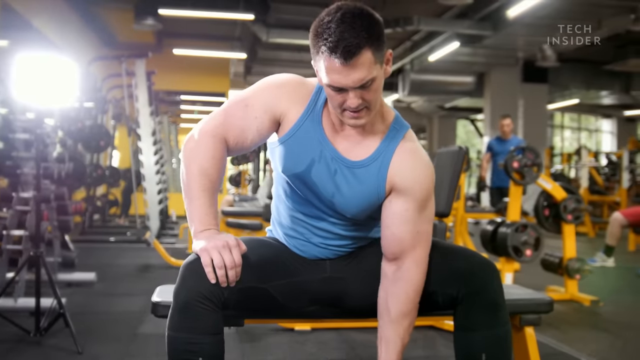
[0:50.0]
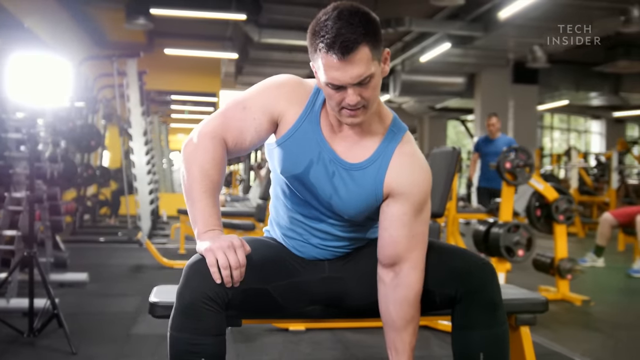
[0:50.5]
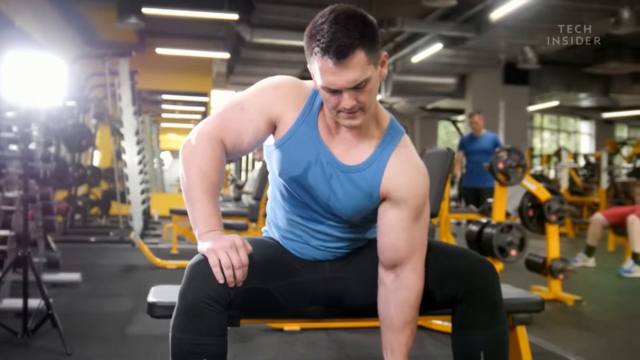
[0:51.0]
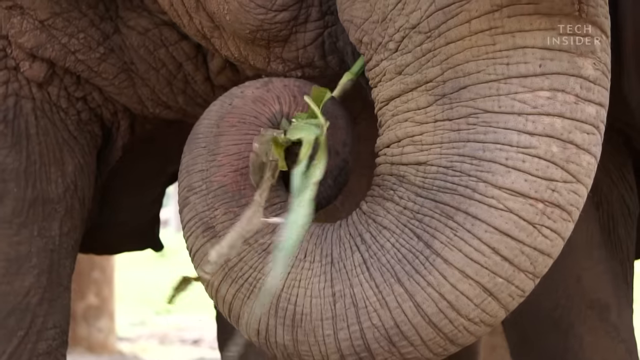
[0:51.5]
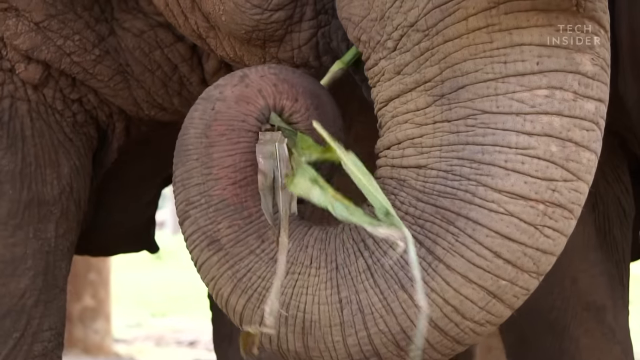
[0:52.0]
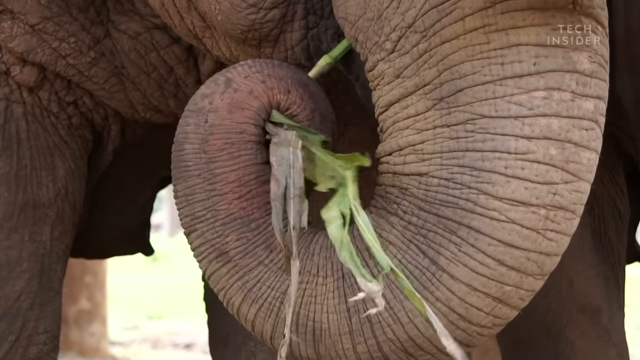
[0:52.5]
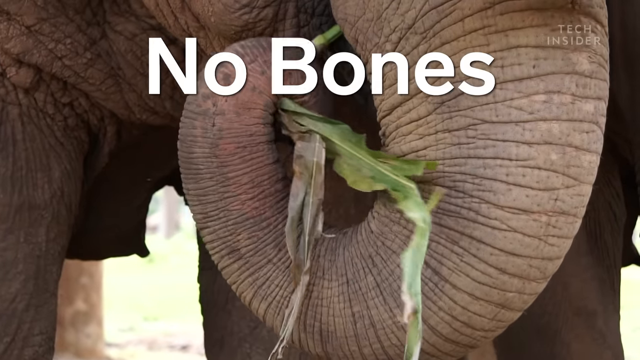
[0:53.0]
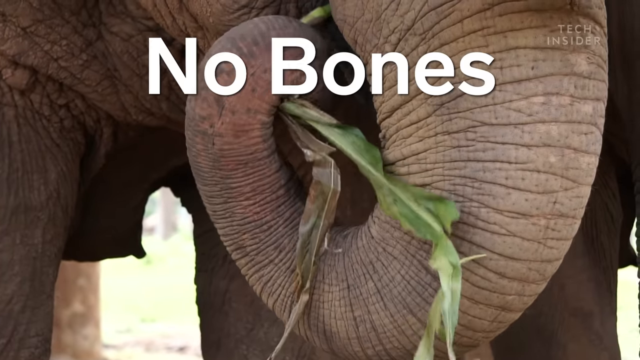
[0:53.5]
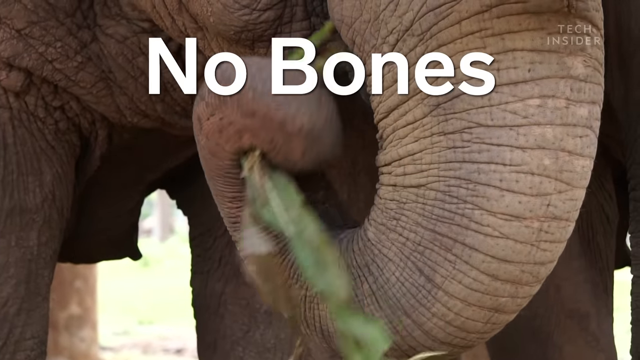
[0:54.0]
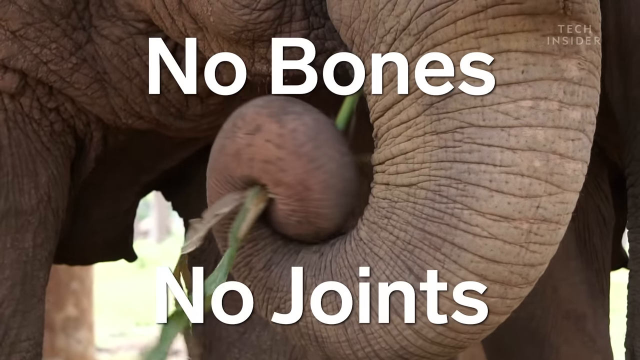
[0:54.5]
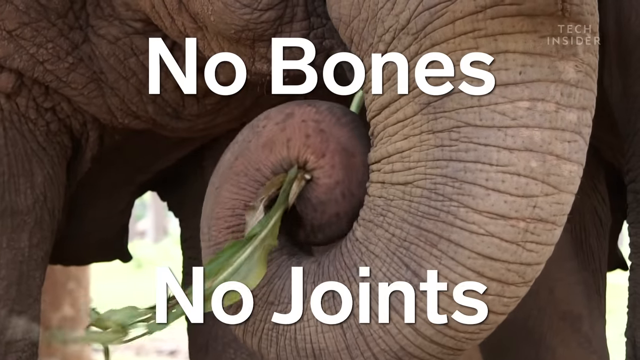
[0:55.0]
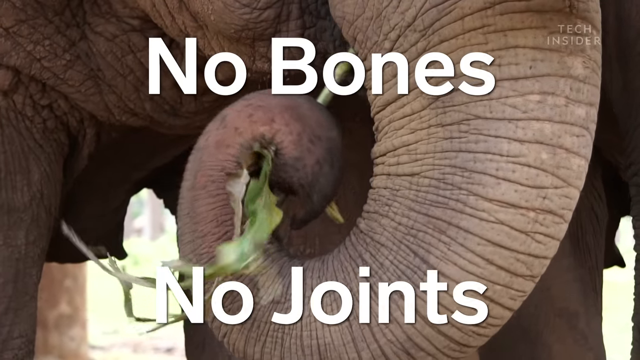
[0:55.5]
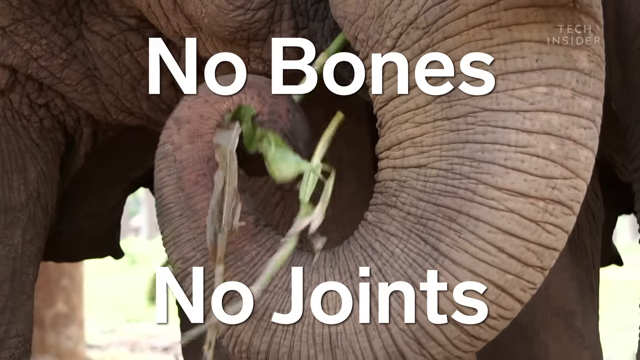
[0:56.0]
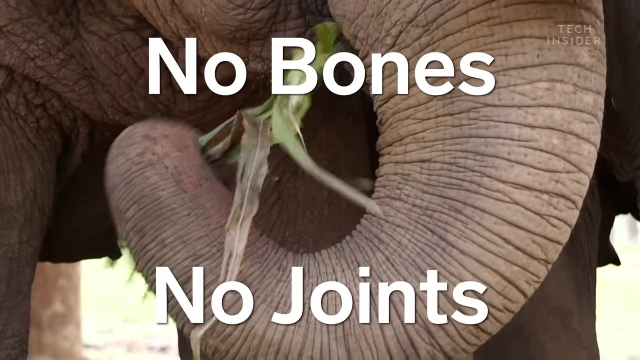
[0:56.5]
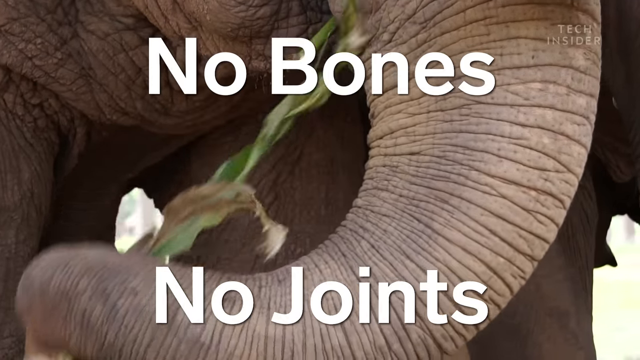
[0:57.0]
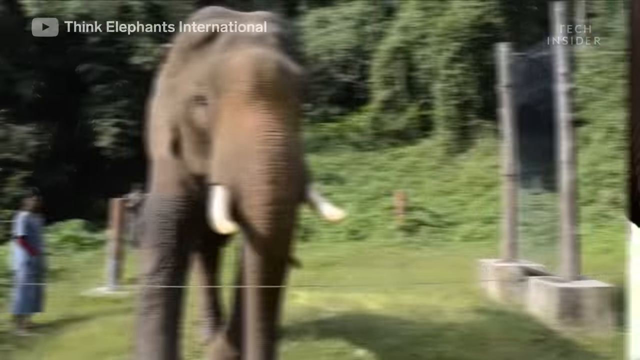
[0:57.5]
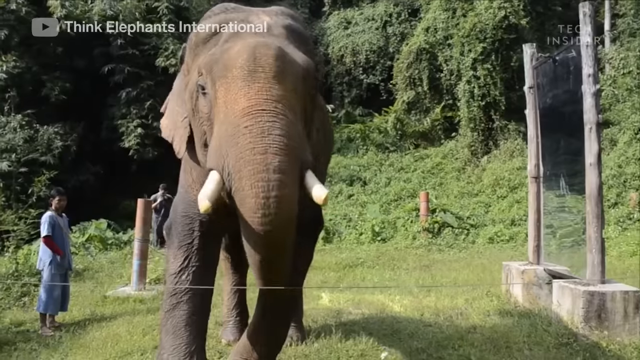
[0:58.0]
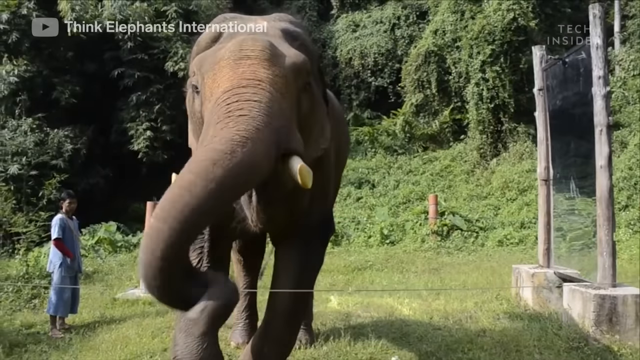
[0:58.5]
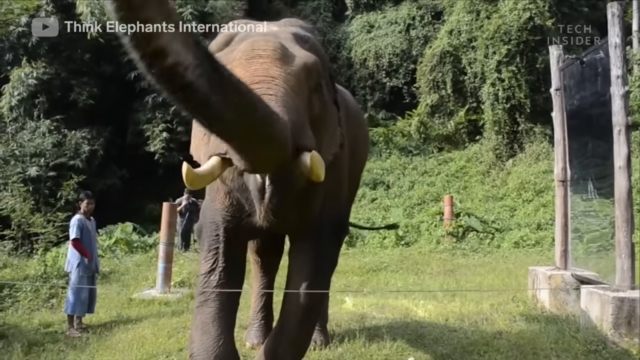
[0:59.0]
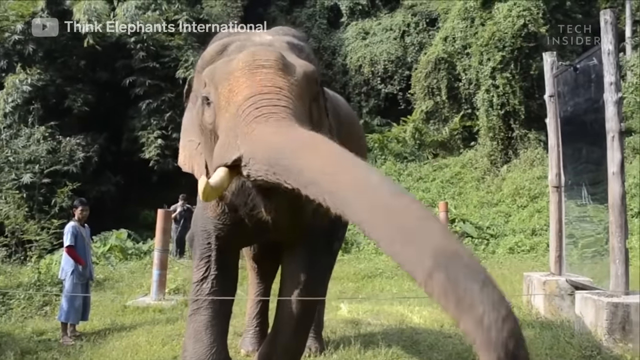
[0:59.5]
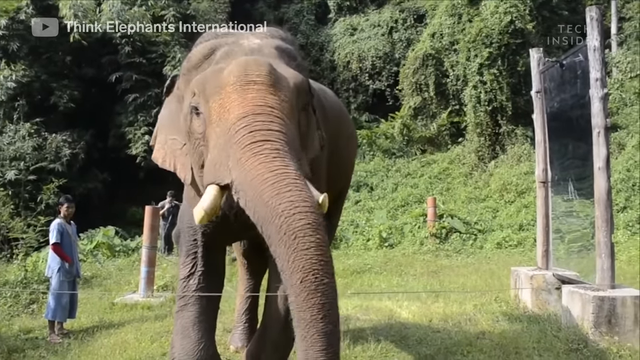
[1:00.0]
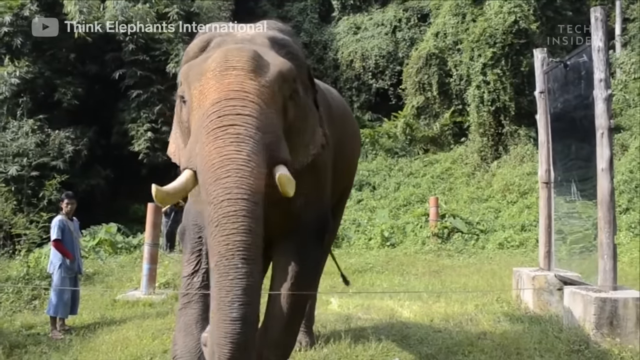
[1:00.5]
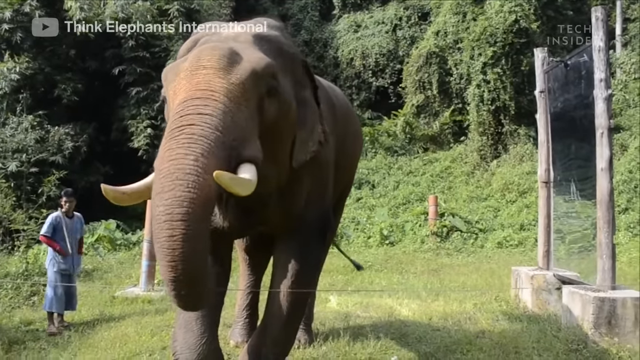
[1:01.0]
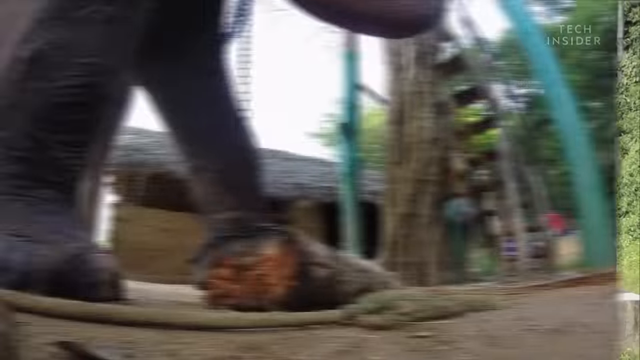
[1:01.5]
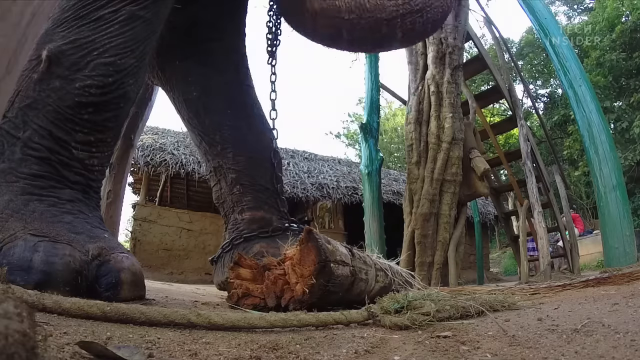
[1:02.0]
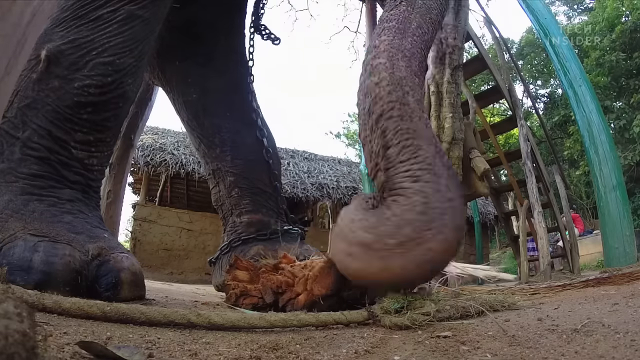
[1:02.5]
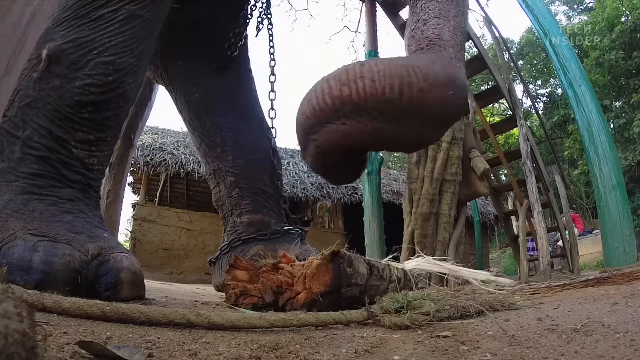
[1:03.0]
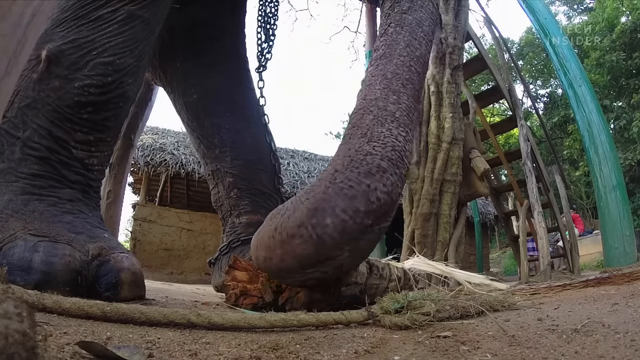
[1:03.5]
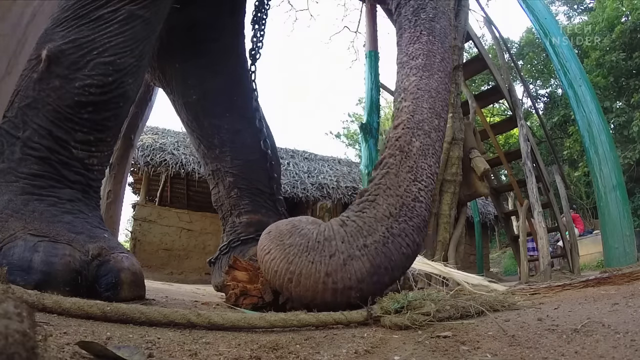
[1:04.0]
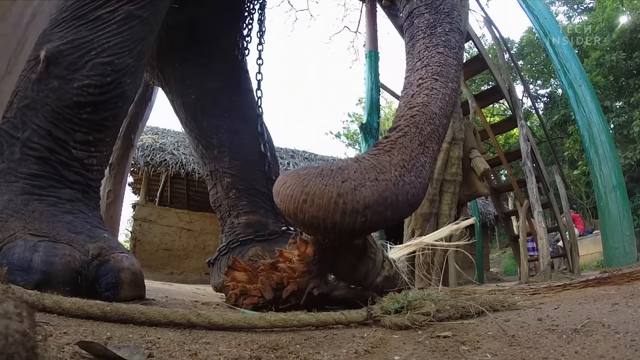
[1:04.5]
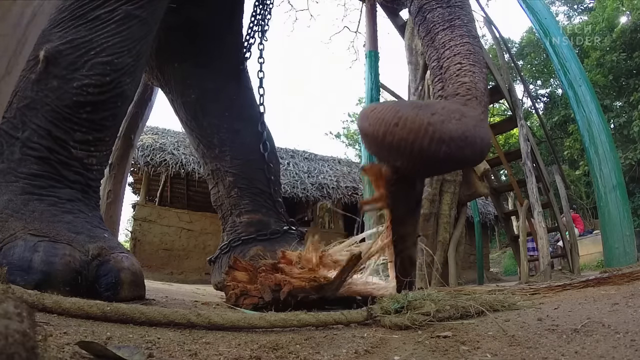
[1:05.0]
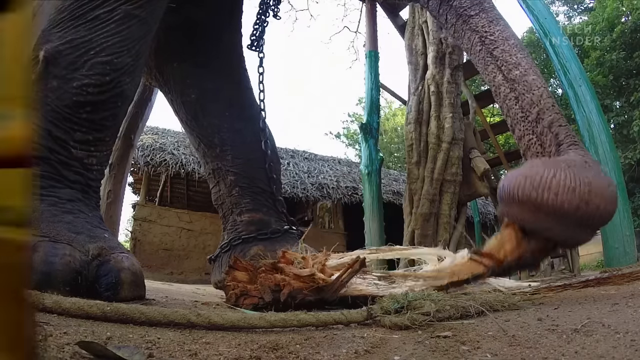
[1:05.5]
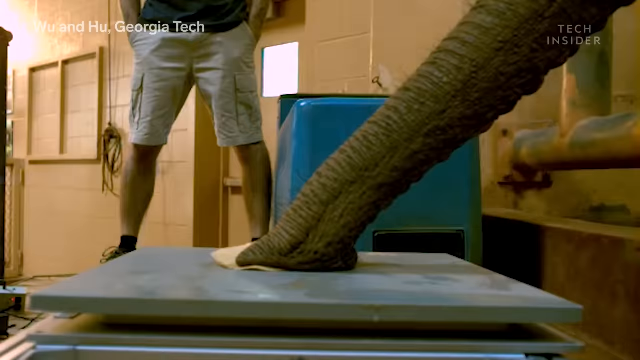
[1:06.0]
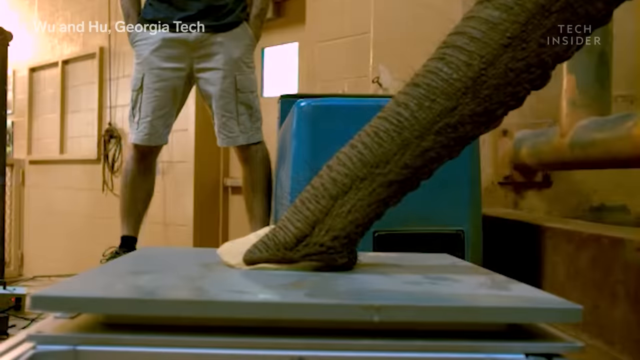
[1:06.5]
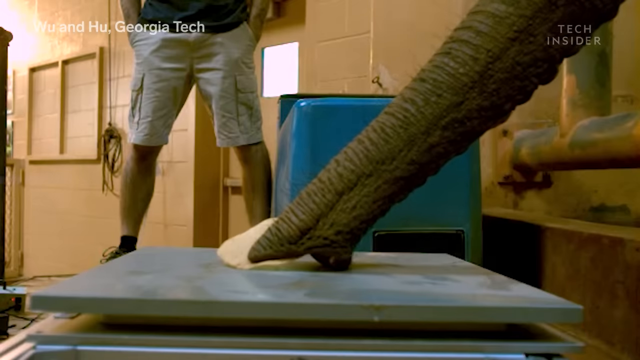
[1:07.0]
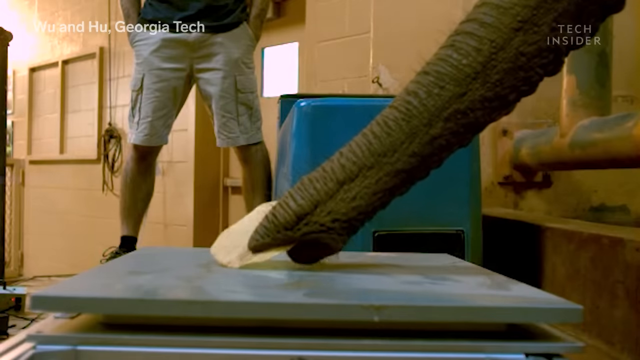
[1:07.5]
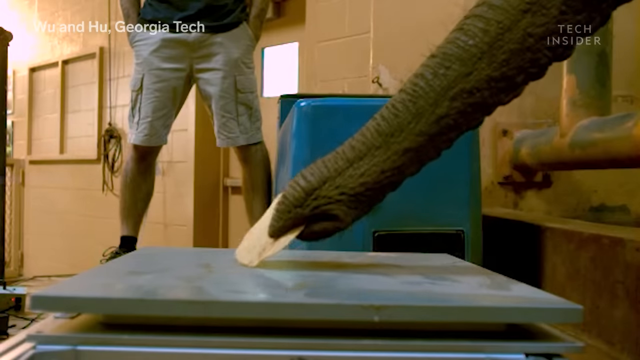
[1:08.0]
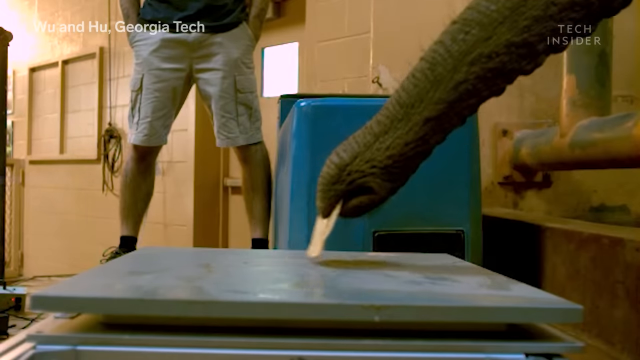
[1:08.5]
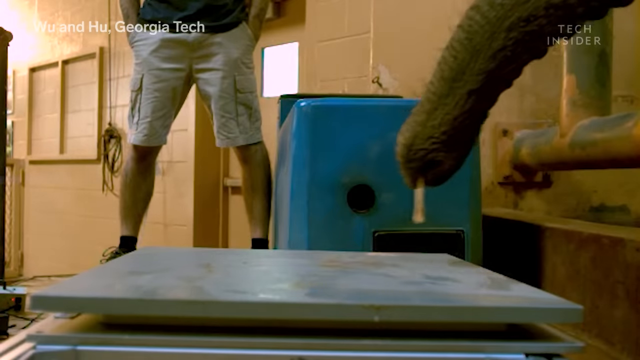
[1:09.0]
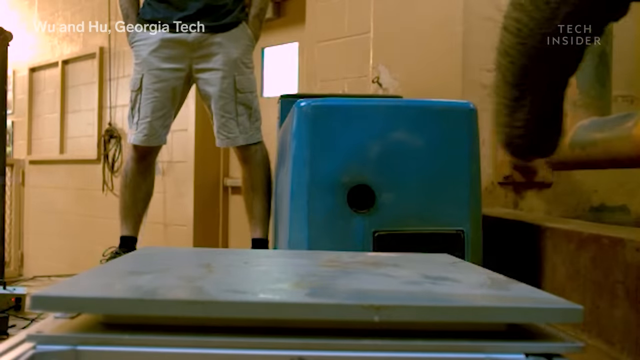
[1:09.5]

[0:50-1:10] The person contracts their bicep. Then an elephant holds a leaf with the text "no bones, no joints". Another elephant waves its trunk, and another grabs and opens something with its trunk. Someone picks up a thin object while a person stands in the background. The gym has yellow equipment and black weights. On the right side, a person in a blue t-shirt is in the back and a person in red shorts is sitting down. On the left side there are studio lights, and at the top there are artificial lights. The person performing the exercise wears a blue and white beater with sweat and black pants and seems to be posing for the camera. In the shot where an elephant moves its trunk towards the camera, a person dressed in blue is on the left side, and at the top it says "Think Elephants International" along with a YouTube link, possibly indicating the source of the video.